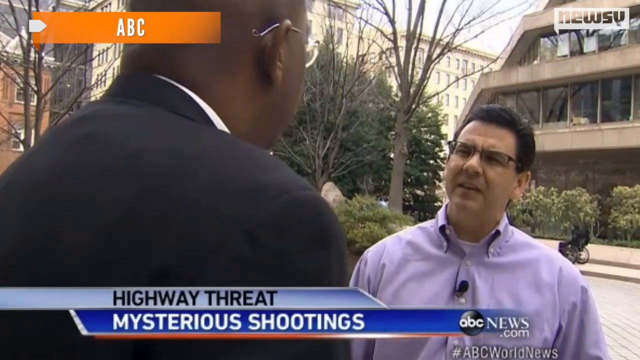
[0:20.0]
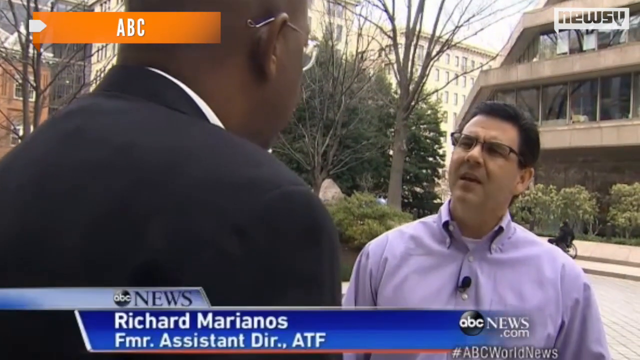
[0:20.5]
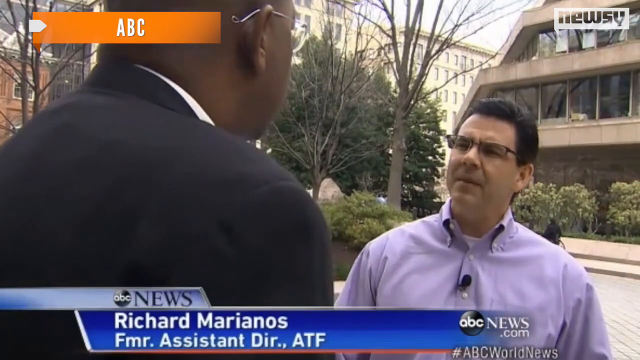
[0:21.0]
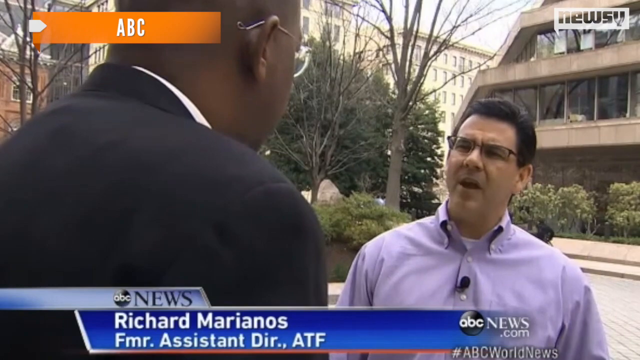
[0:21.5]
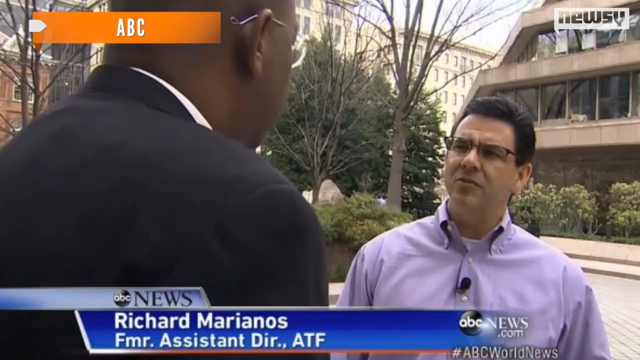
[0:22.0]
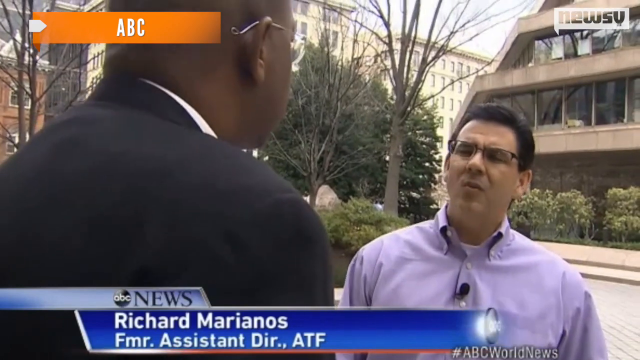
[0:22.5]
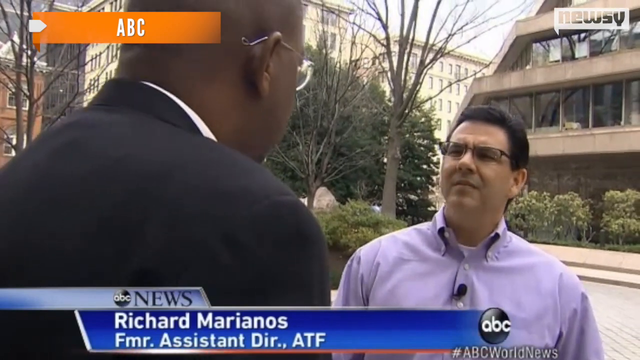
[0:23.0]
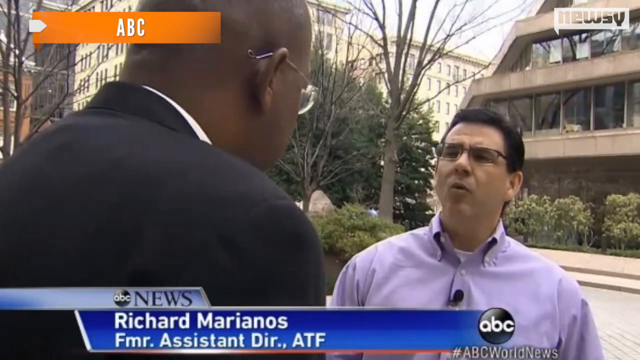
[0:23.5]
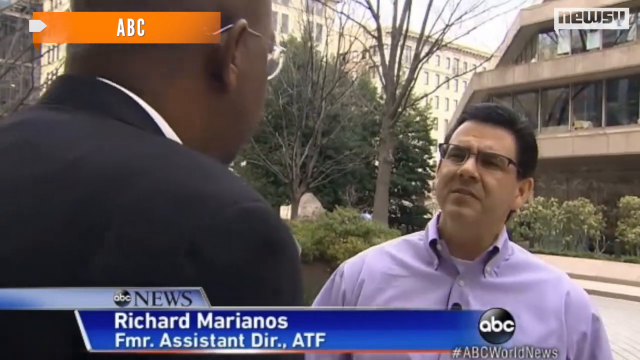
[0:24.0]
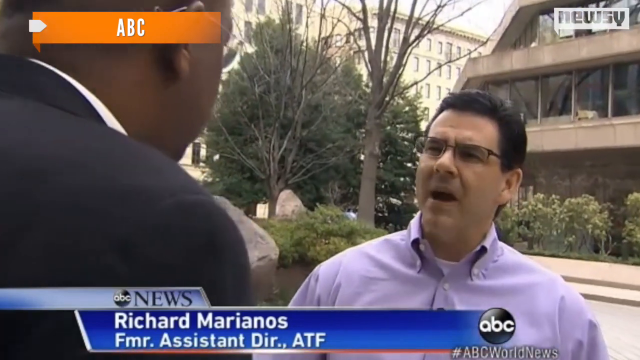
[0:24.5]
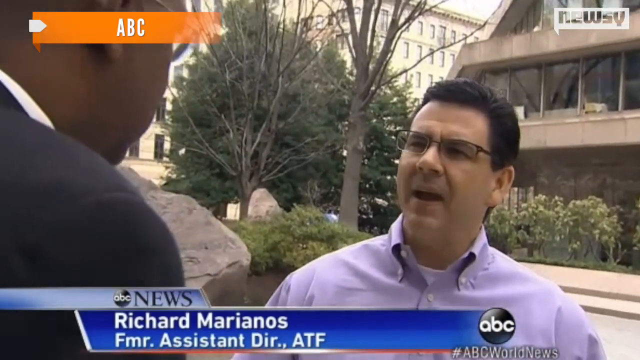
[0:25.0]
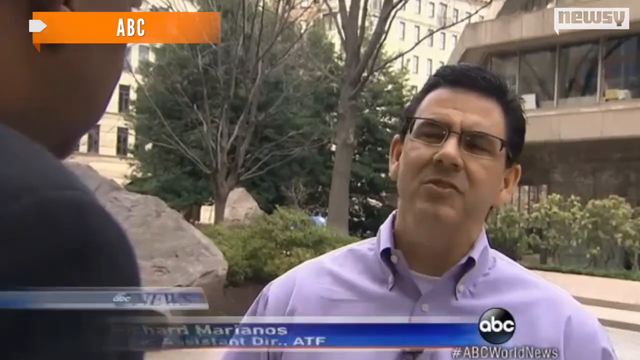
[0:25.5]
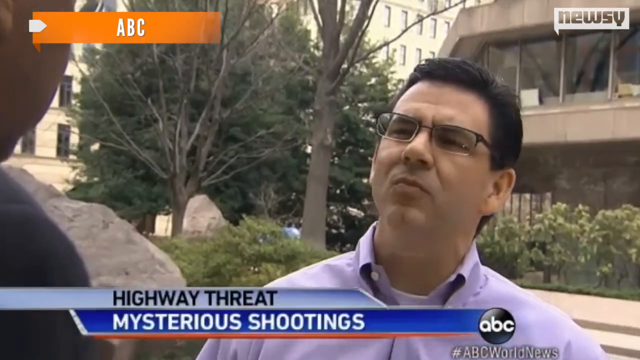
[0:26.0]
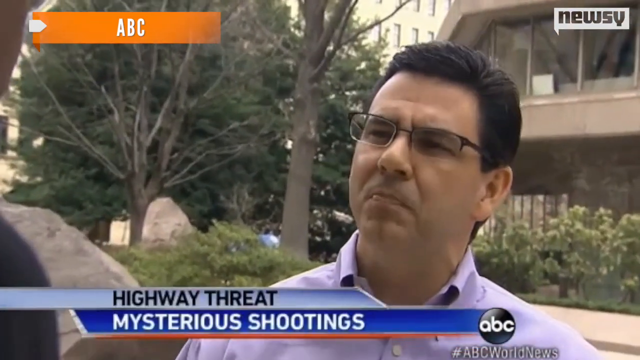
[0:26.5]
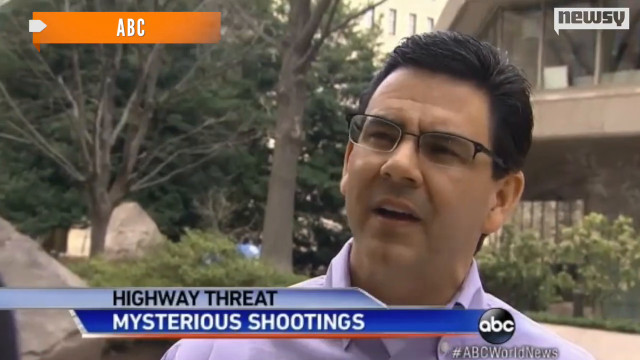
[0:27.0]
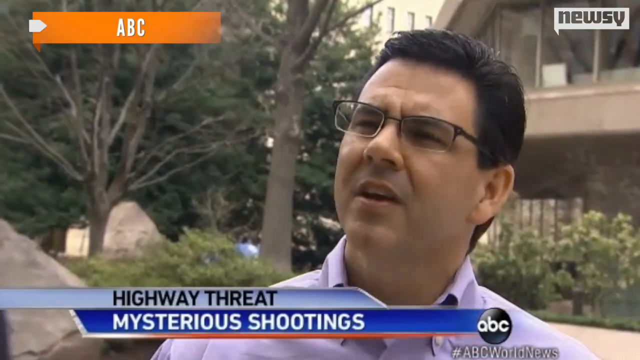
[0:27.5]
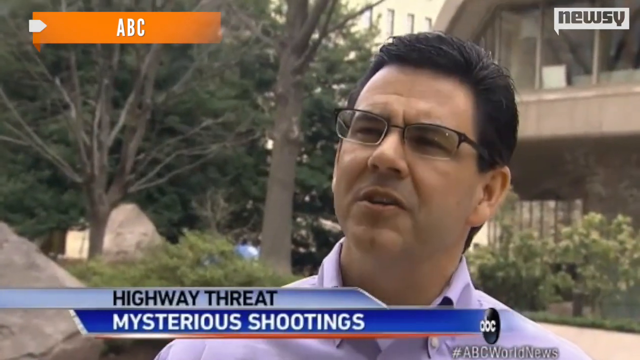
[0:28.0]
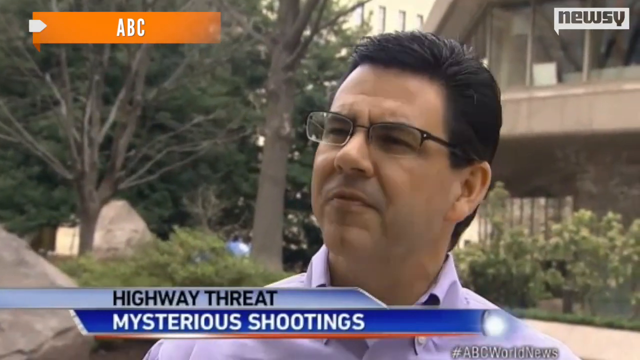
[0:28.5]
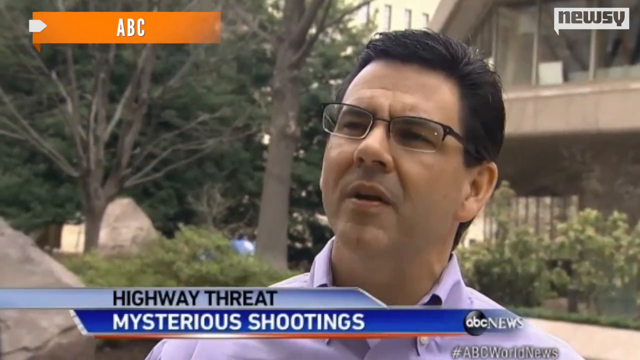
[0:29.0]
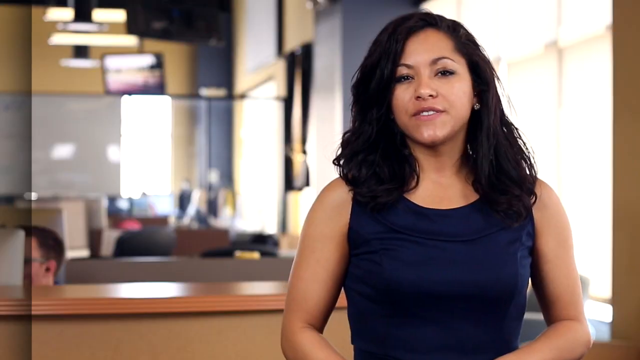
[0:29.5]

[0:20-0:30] The news broadcast continues with the headline "at least a dozen highway shootings now linked," which then changes to "highway threat, mystery shootings." A news anchor named Richard Marjons is on the ground interviewing a person wearing a suit. Richard is outside, with people passing in the background along with trees and buildings, showing that they are on the street.